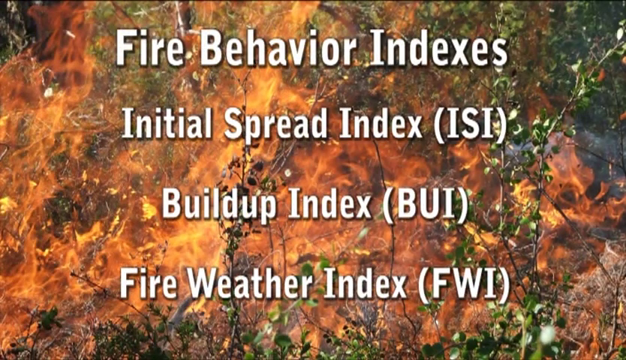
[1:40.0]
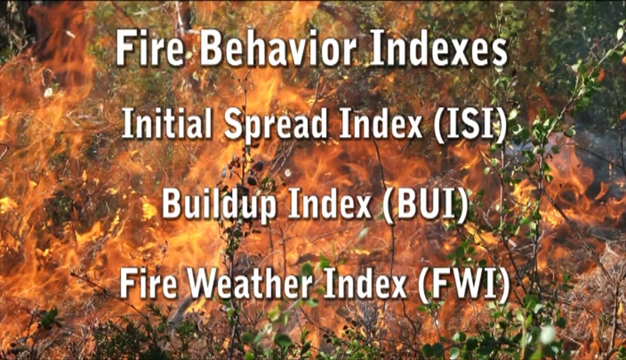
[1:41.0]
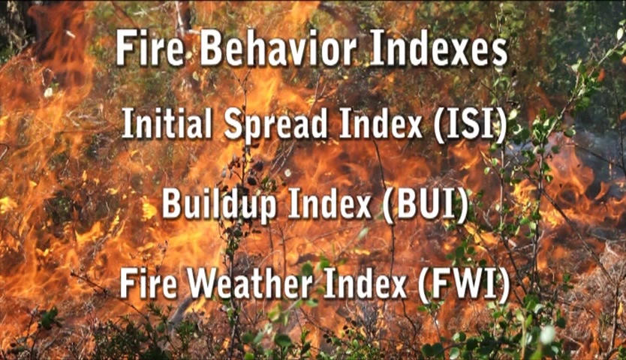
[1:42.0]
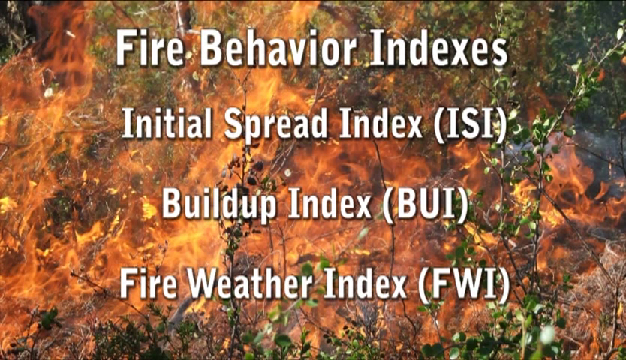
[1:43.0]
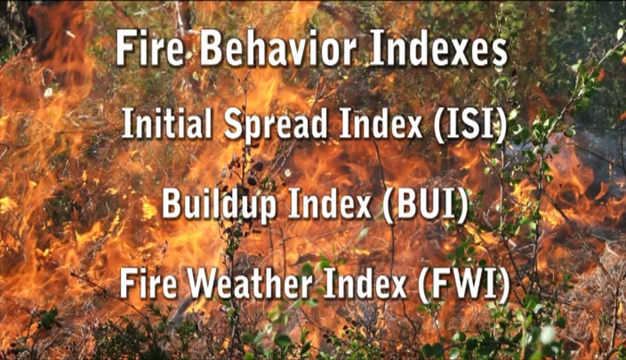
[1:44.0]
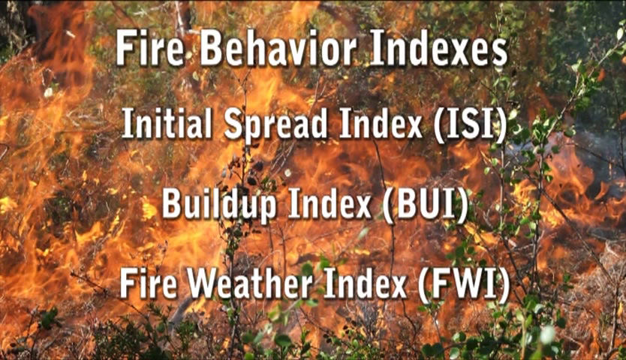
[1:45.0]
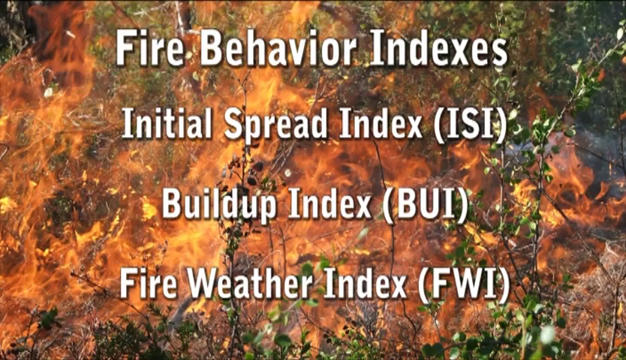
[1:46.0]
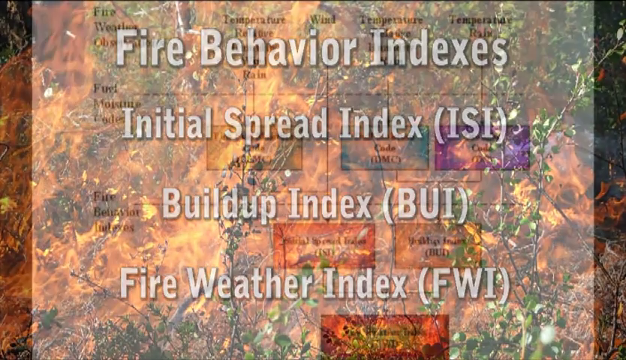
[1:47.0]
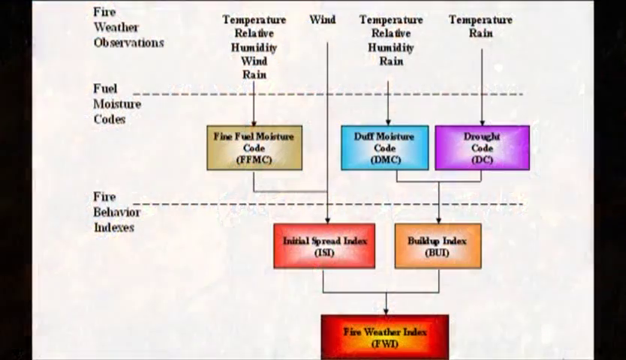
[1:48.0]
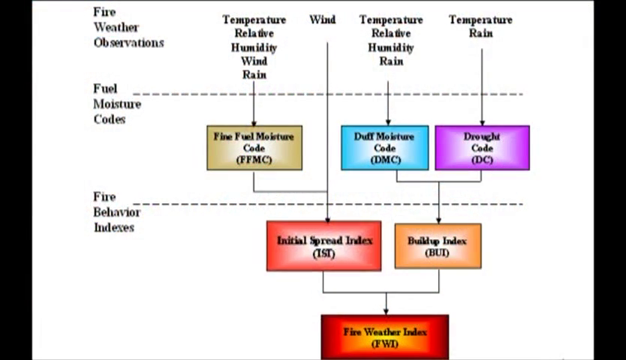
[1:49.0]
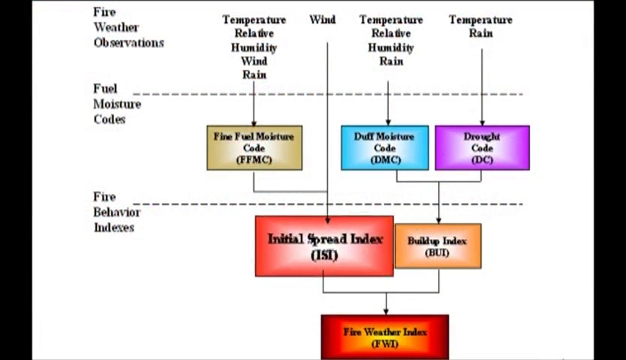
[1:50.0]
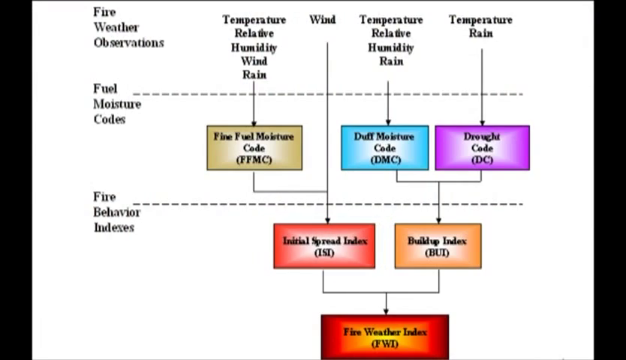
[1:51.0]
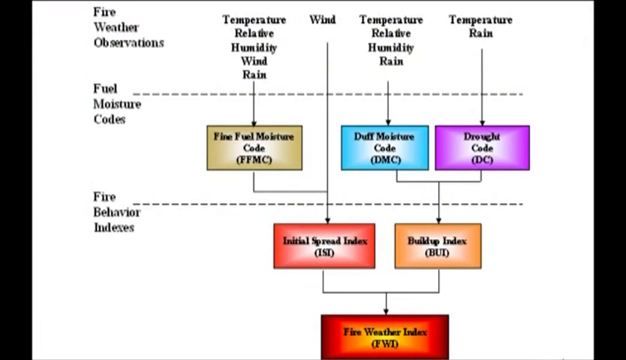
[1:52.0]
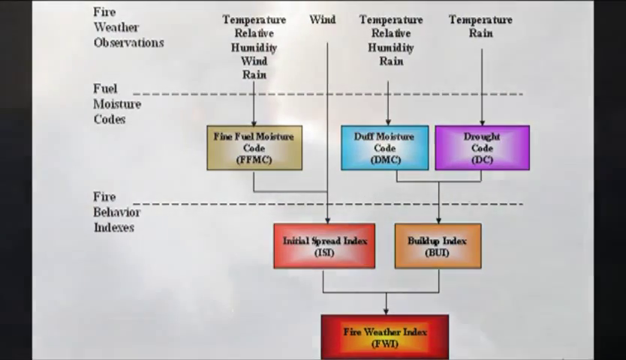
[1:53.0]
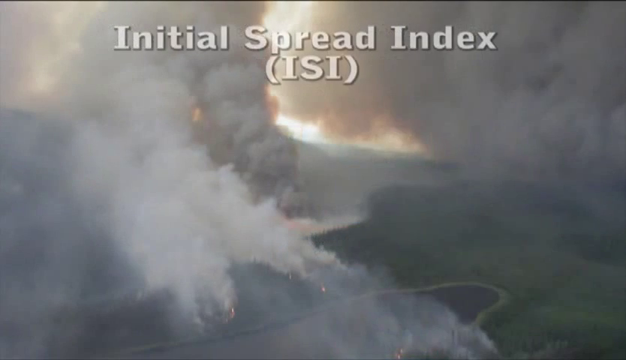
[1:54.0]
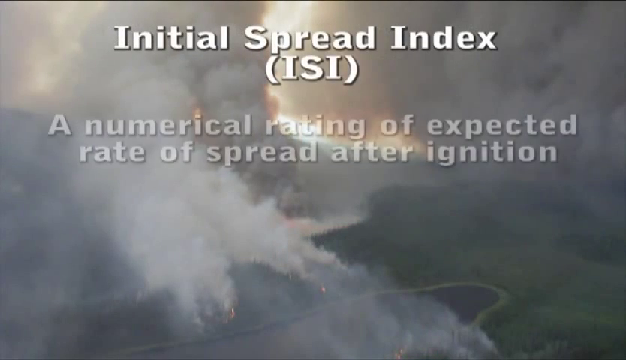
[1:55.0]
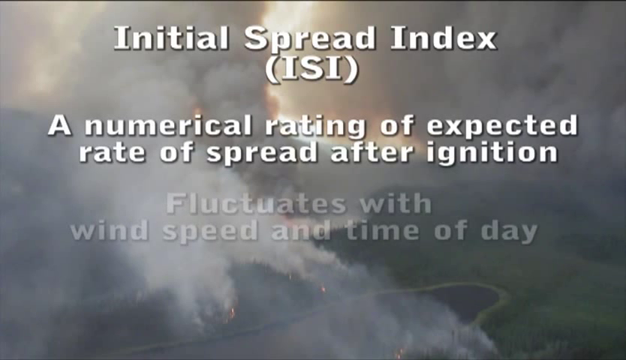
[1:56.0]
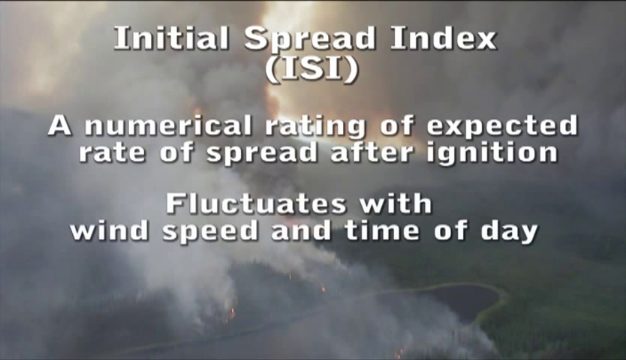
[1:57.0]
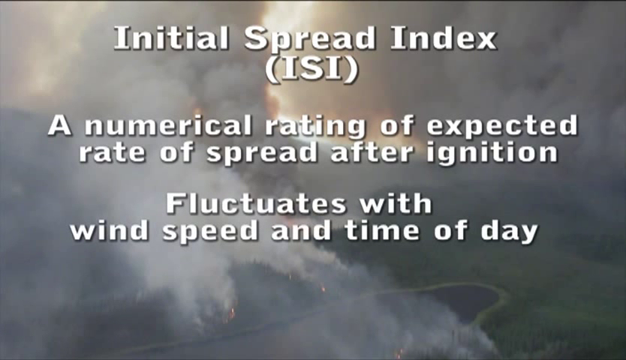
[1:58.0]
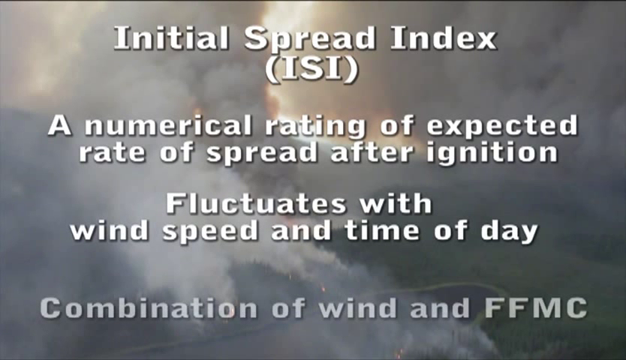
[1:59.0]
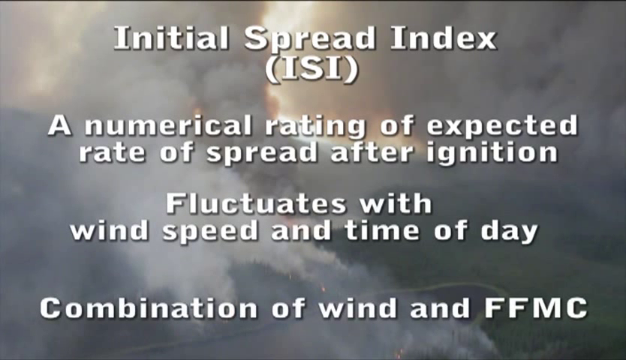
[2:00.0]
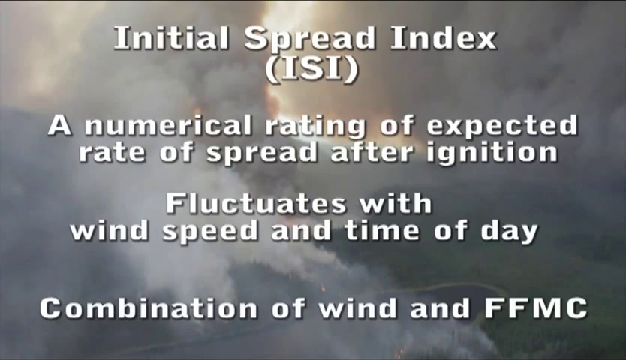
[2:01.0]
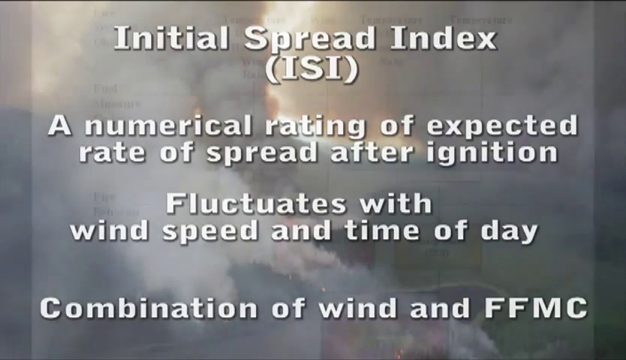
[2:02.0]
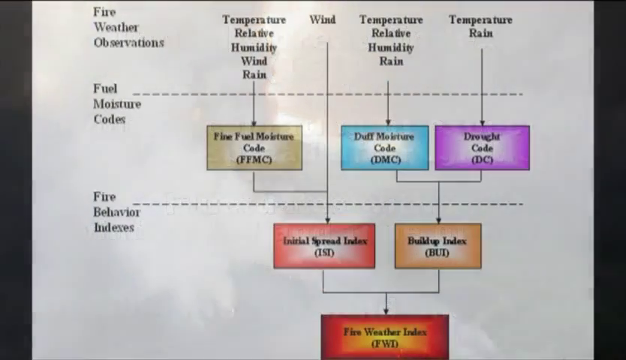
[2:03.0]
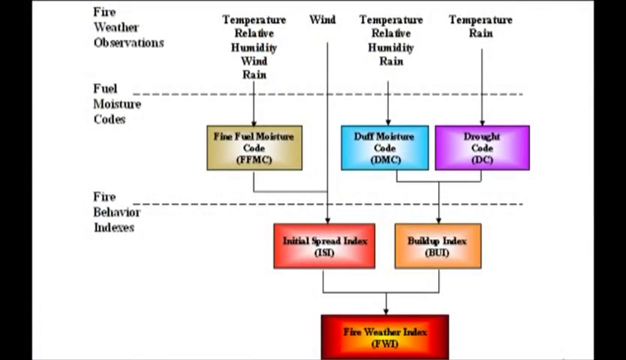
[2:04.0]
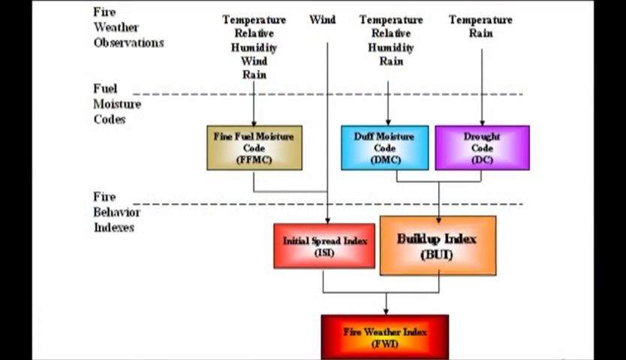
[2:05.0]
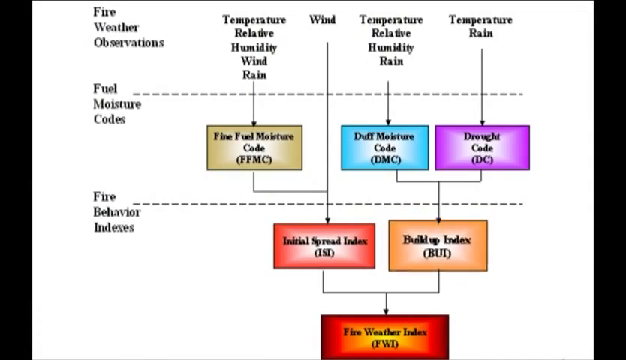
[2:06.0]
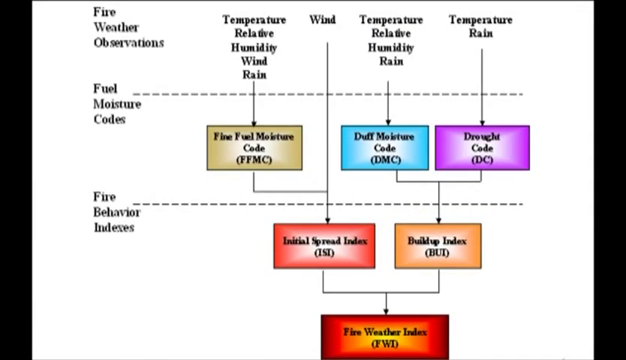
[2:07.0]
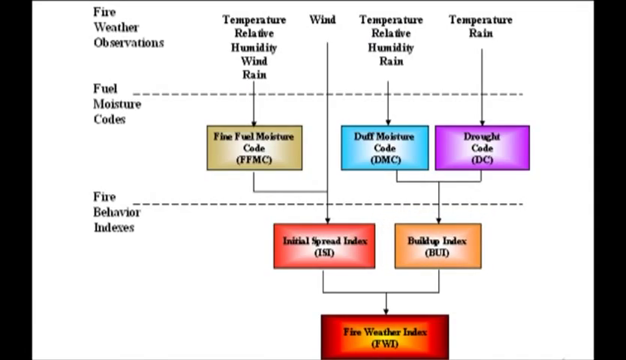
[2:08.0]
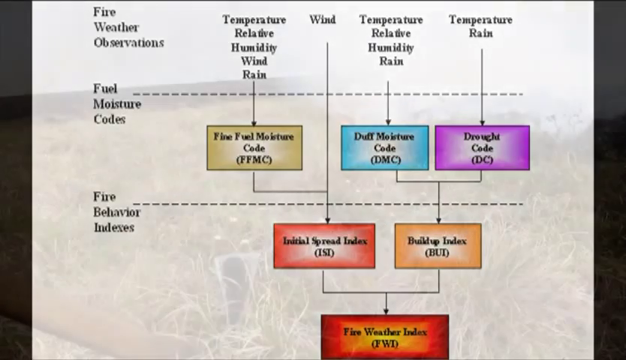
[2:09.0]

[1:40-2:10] A close-up picture of a forest fire shows the fire burning the leaves, with trees in the background. Big white letters, from top down, read "fire behavior indexes," then "initial spread index (ISI)," then "build-up index (BUI)," and then "fire weather index (FWI)."